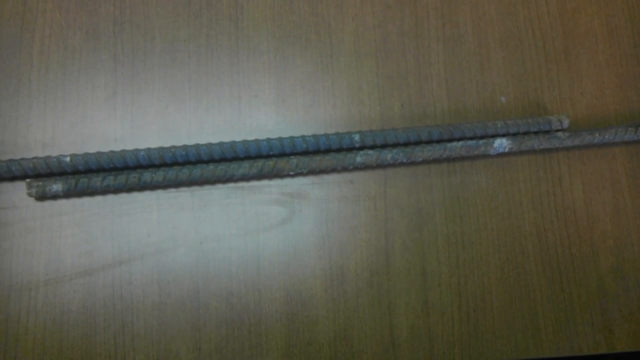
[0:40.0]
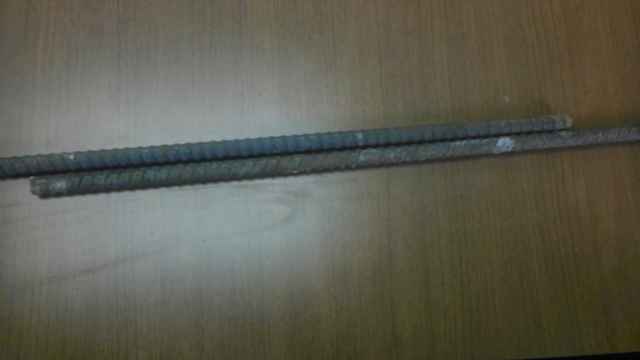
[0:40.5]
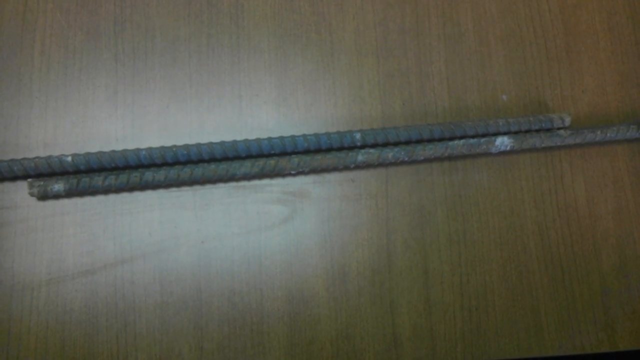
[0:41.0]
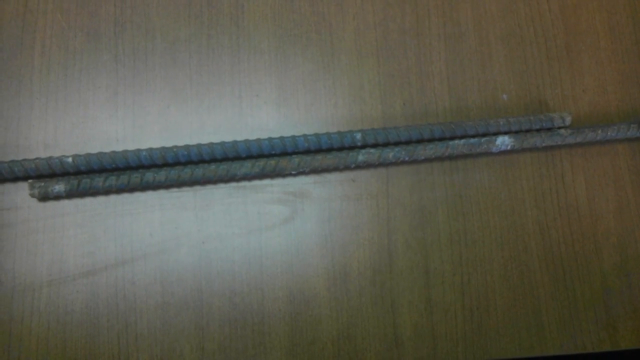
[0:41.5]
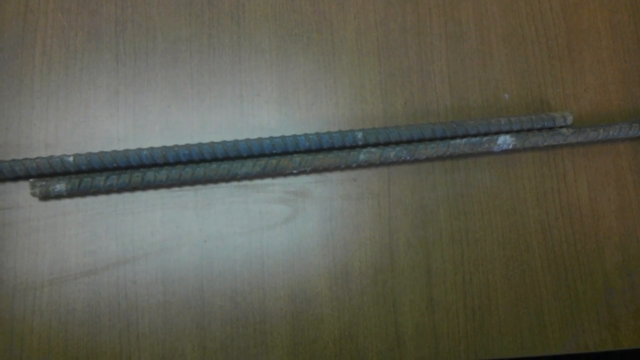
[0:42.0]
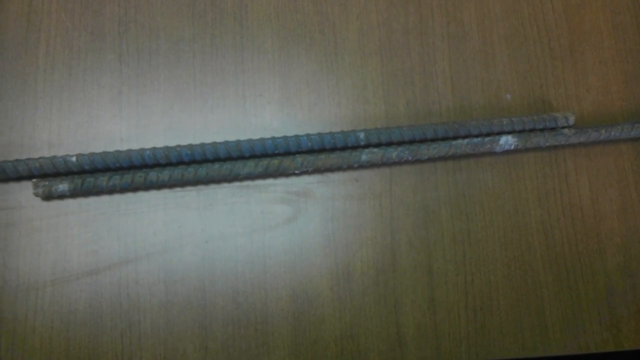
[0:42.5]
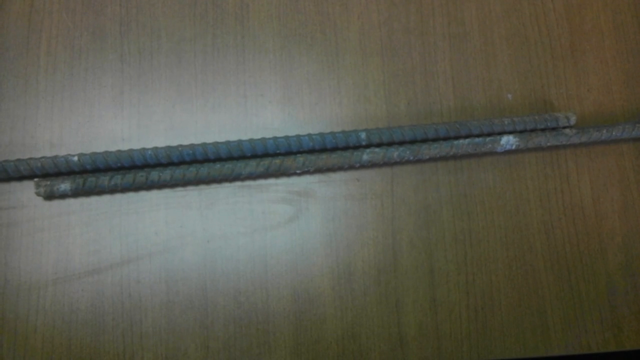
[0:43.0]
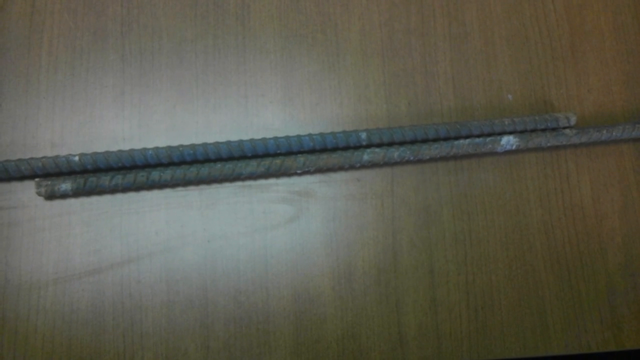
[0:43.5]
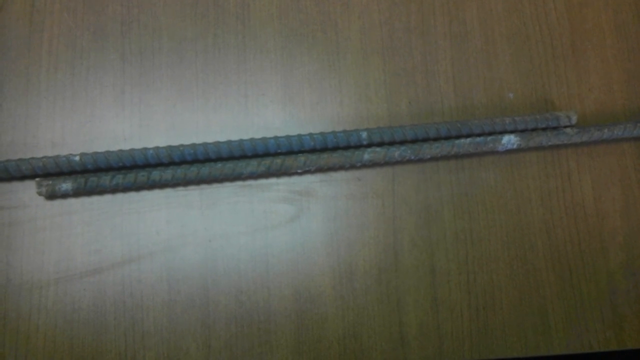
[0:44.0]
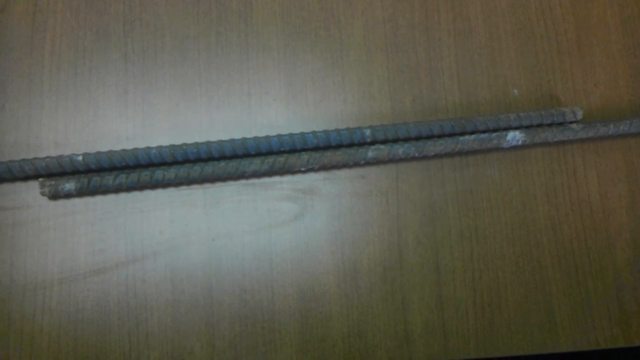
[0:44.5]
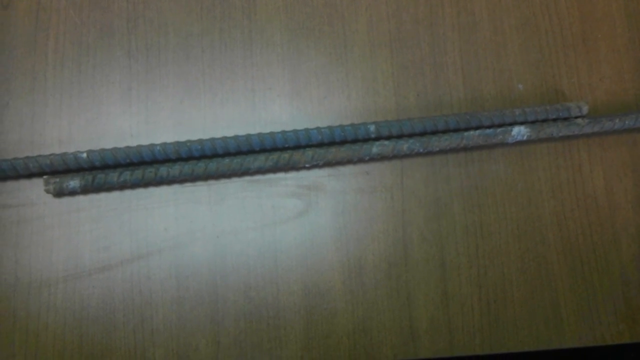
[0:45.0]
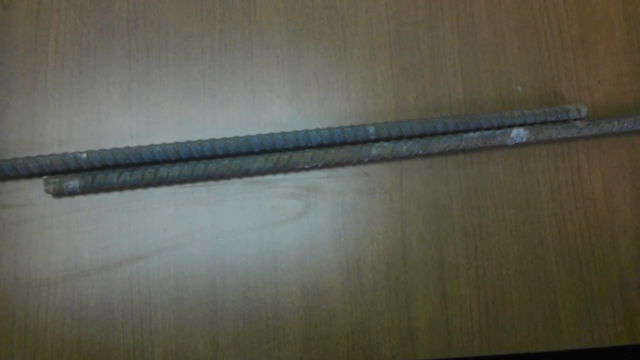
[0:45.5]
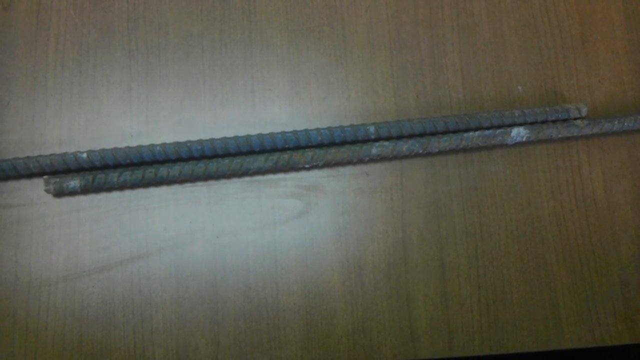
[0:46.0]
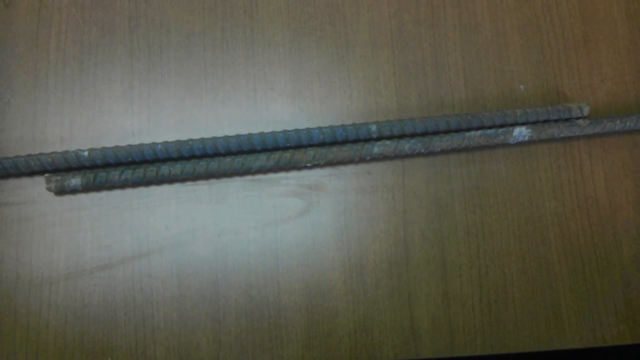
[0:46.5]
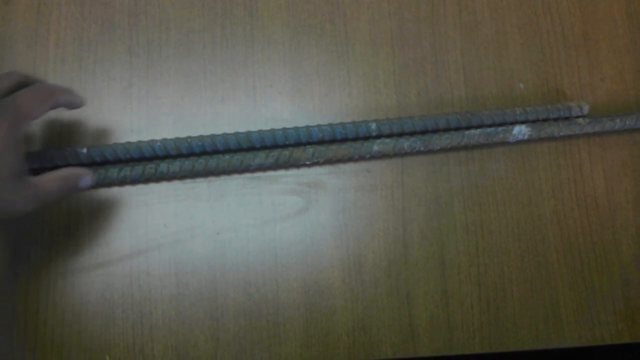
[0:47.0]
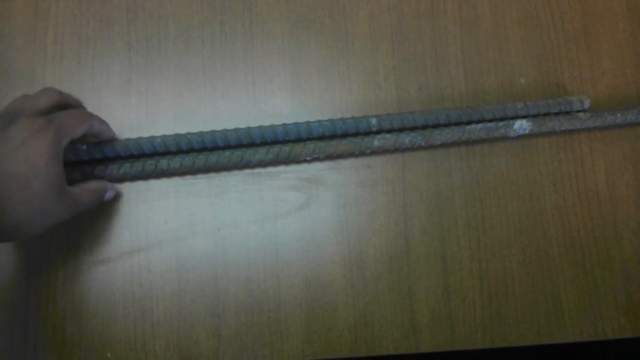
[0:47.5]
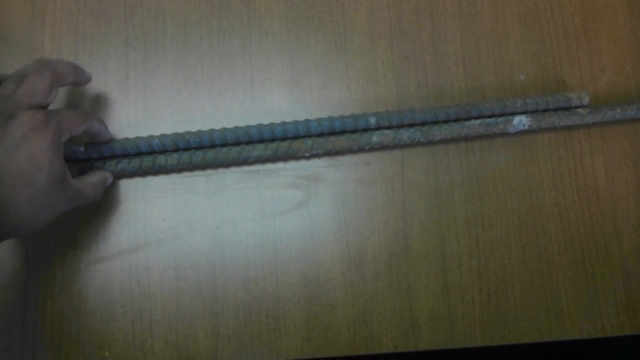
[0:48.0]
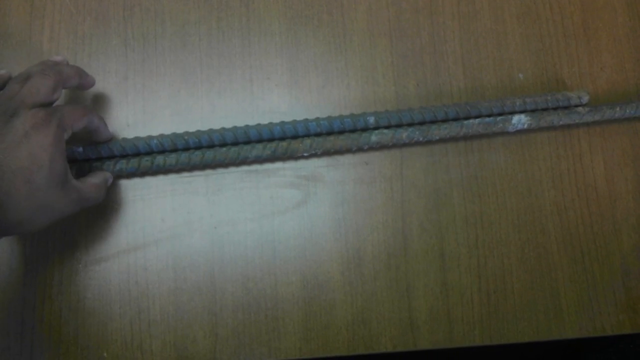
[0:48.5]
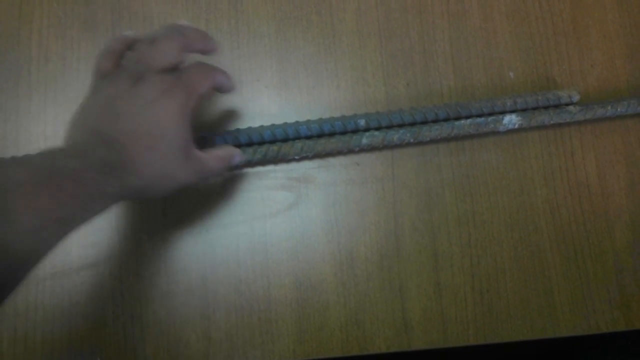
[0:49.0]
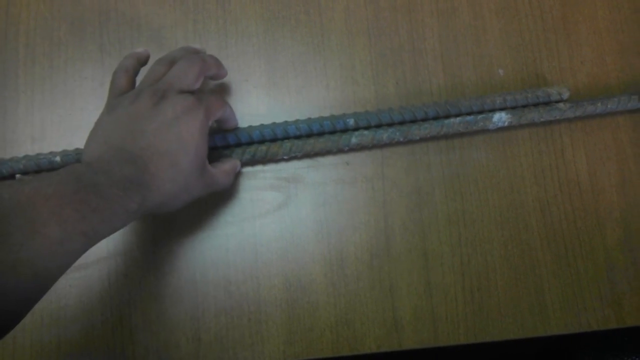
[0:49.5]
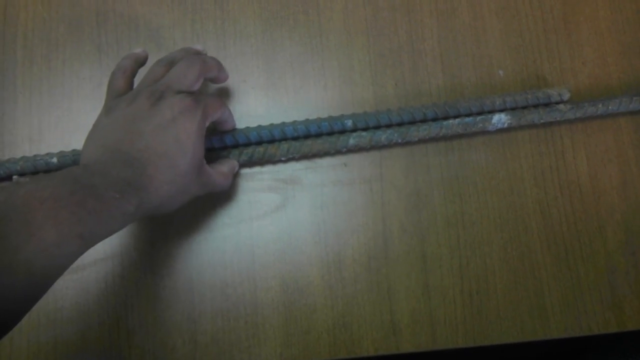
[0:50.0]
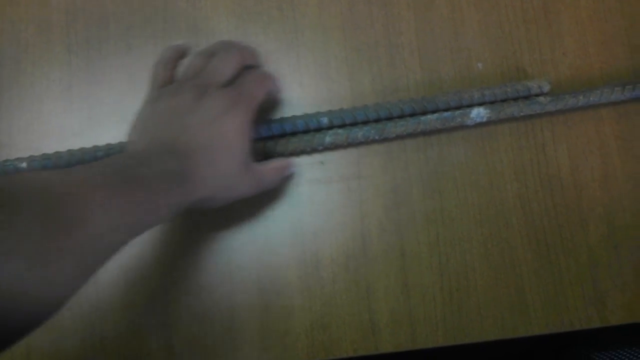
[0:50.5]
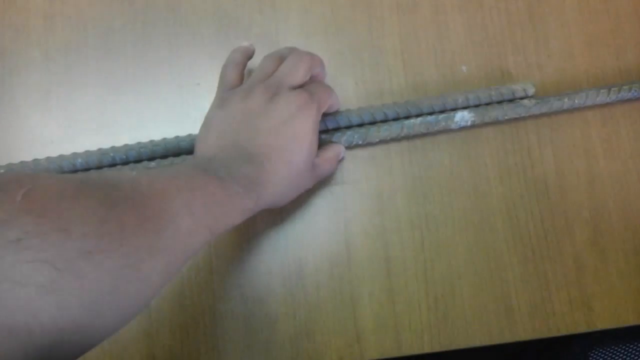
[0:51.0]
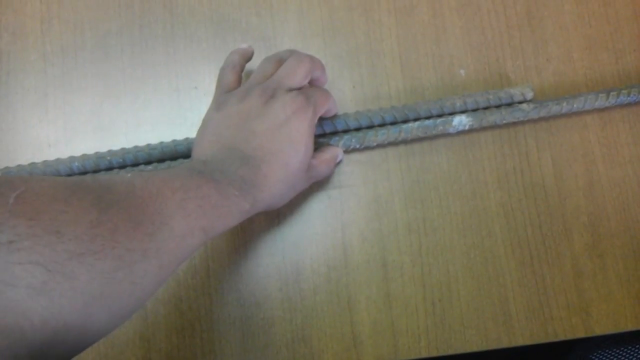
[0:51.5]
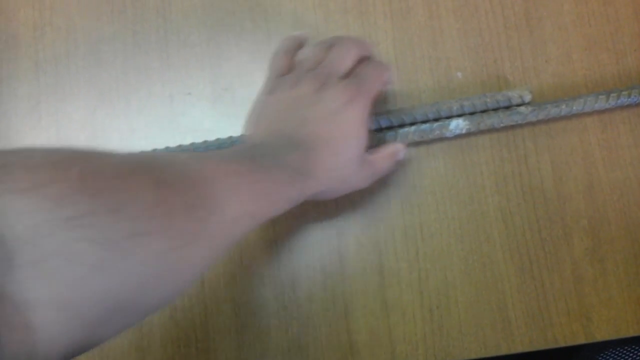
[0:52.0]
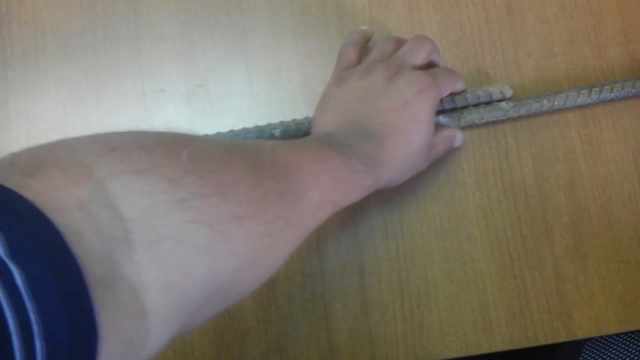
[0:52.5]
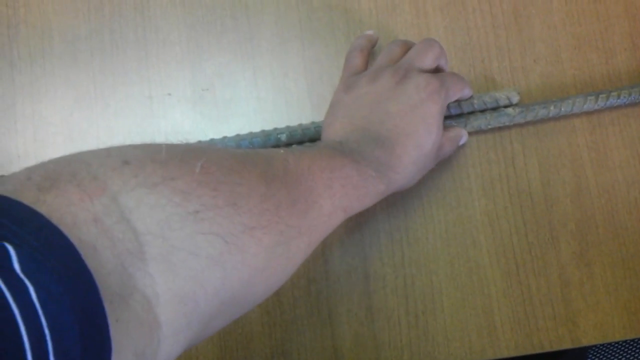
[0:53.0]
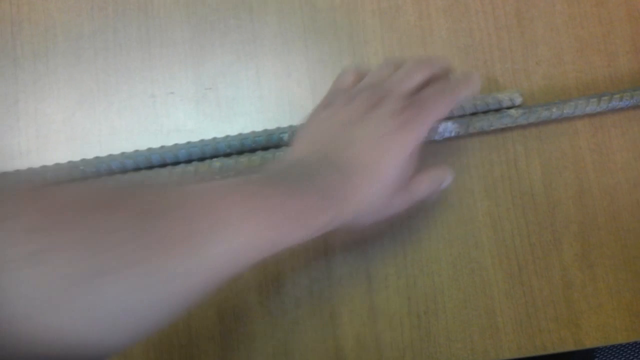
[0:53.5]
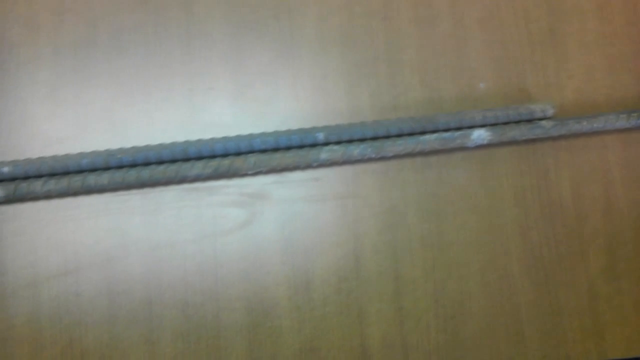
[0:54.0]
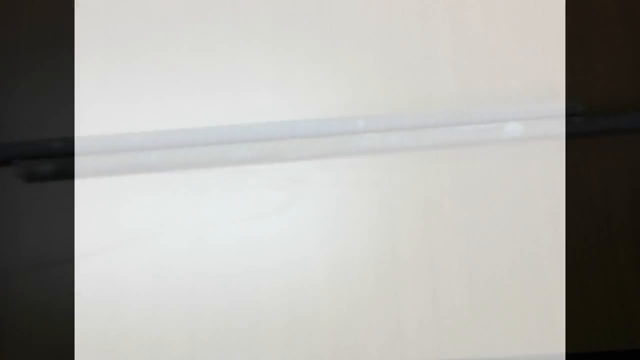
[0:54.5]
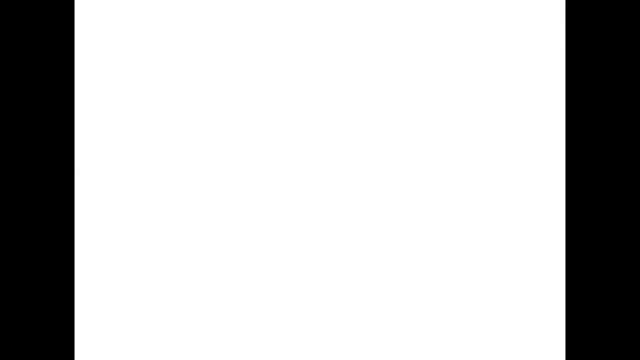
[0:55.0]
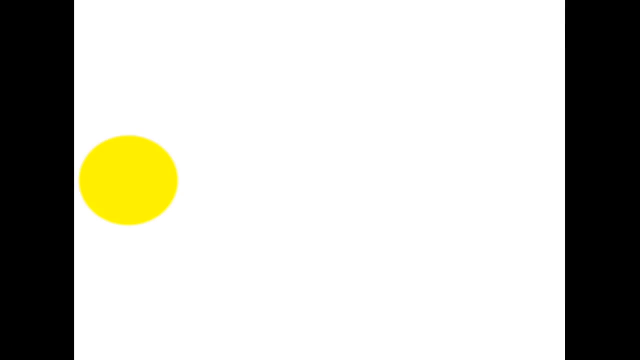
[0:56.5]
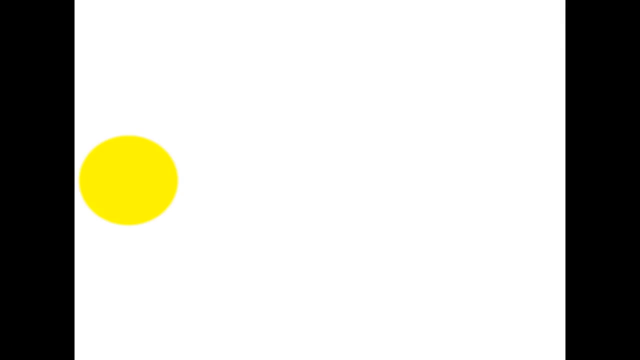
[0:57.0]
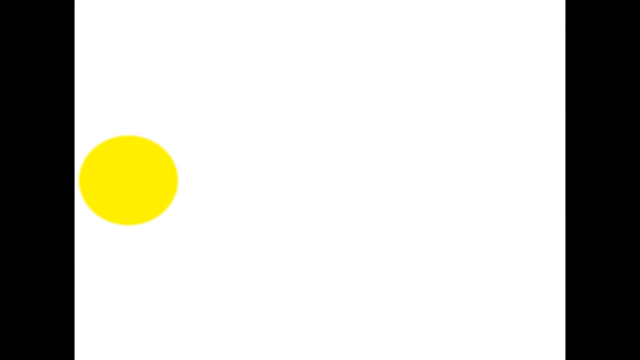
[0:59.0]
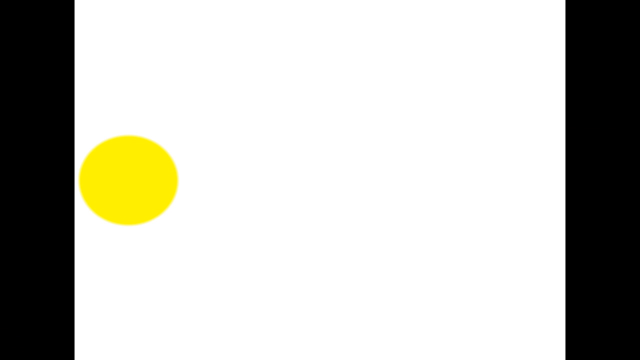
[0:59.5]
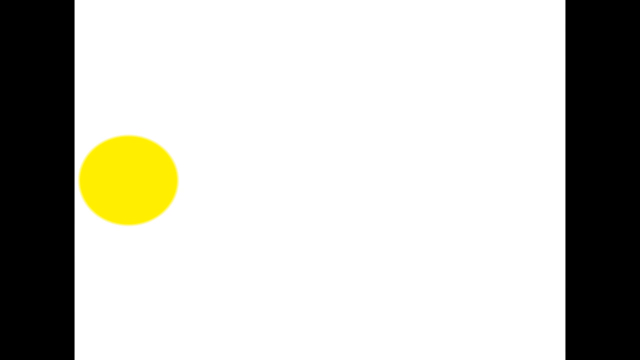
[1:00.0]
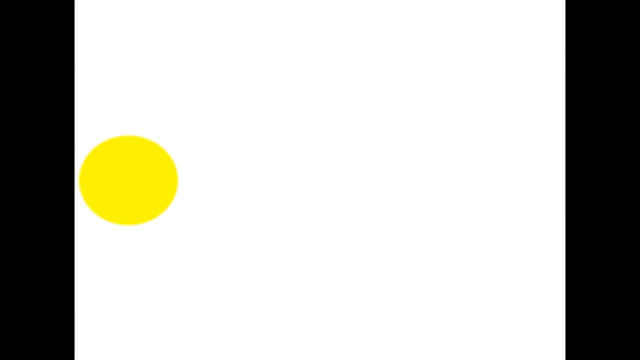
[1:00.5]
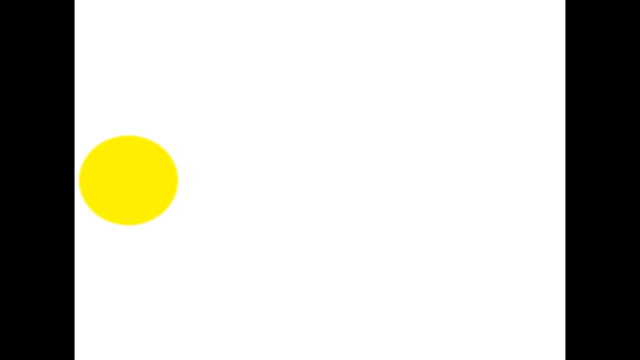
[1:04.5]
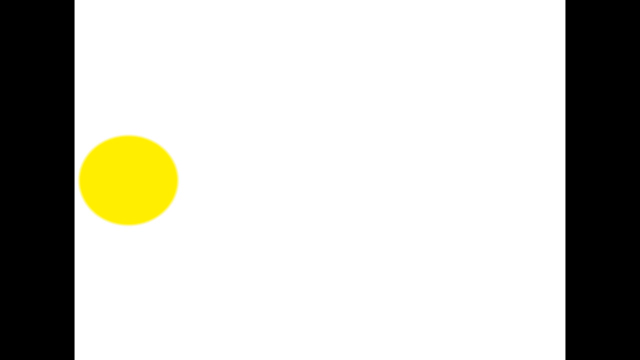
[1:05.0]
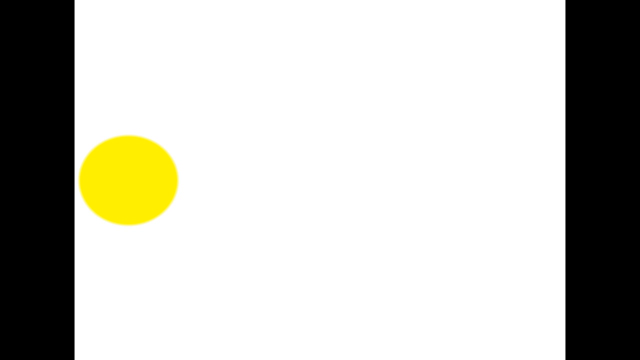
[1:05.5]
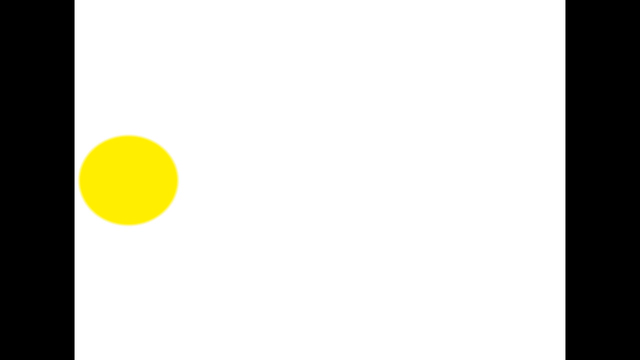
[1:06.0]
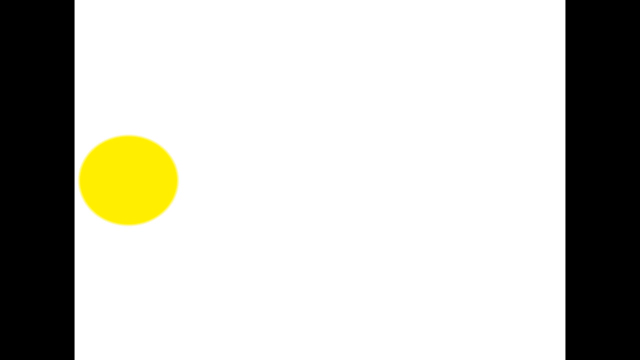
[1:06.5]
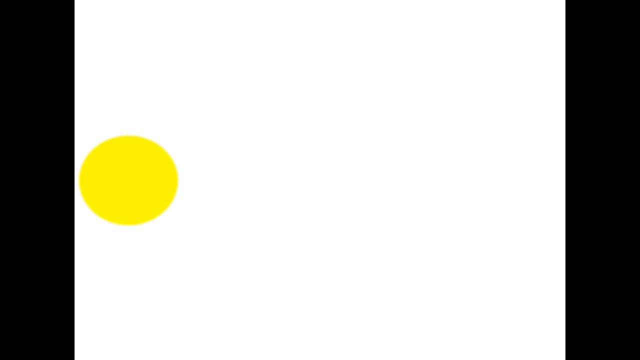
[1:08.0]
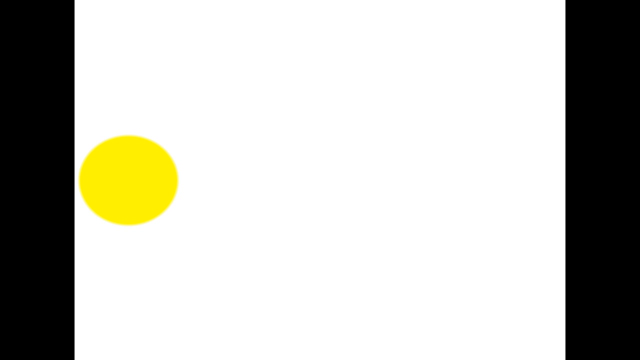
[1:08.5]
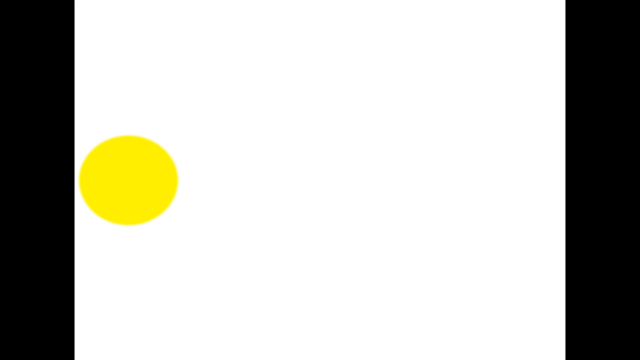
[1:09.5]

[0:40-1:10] Two pieces of rebar lie next to one another in the center of a wooden table: one comes from the left side of the screen and almost extends to the right side, and the other starts at the right side and almost extends to the left. The view looks down on them from above, and there is glare on the table from an overhead light source. The camera shakes. A hand and arm enter from the left-hand side of the frame and pinch off certain distances on the rebar; the person appears to be counting off segments of the bar or measuring it by pinching segments. The screen then dissolves to white with a yellow circle on the left-hand side.